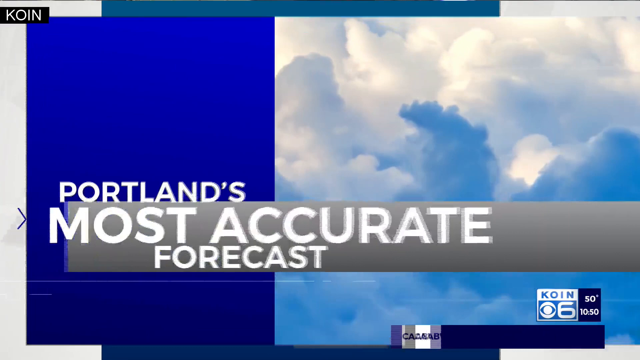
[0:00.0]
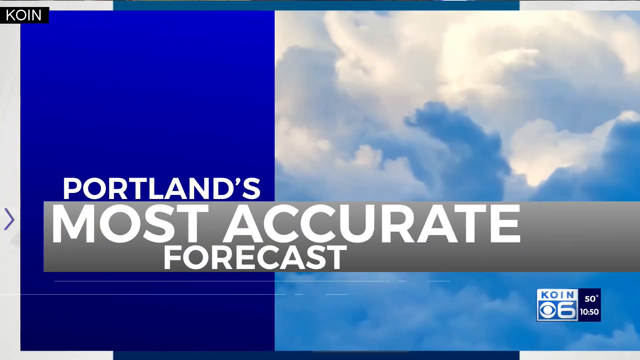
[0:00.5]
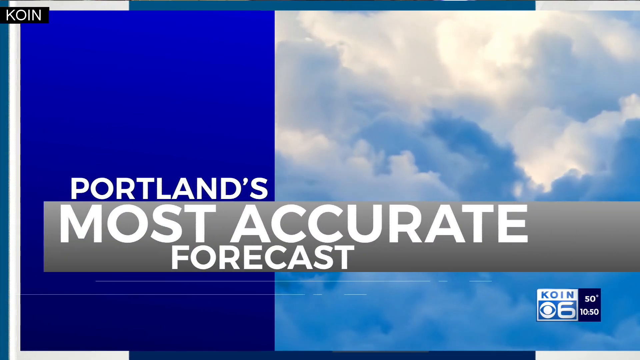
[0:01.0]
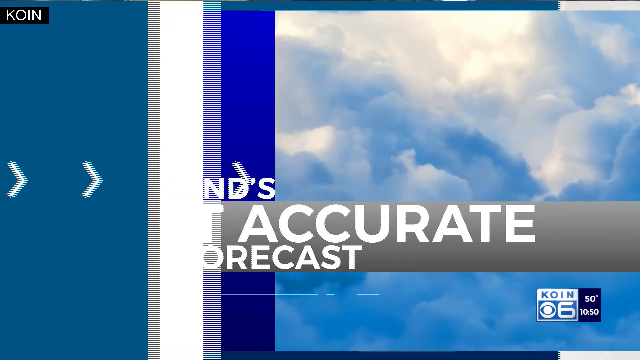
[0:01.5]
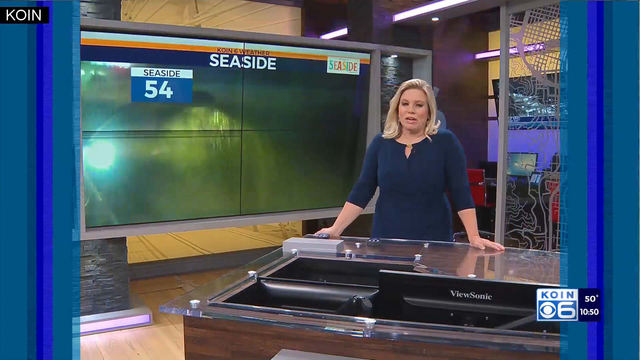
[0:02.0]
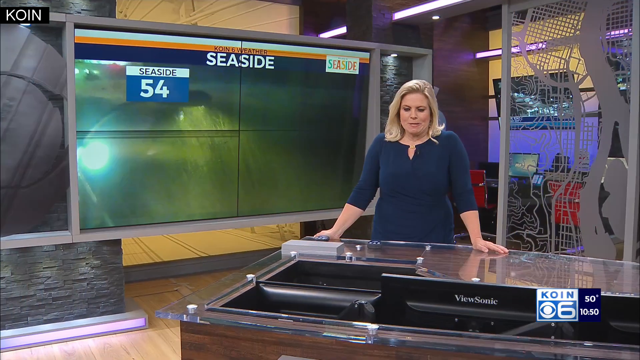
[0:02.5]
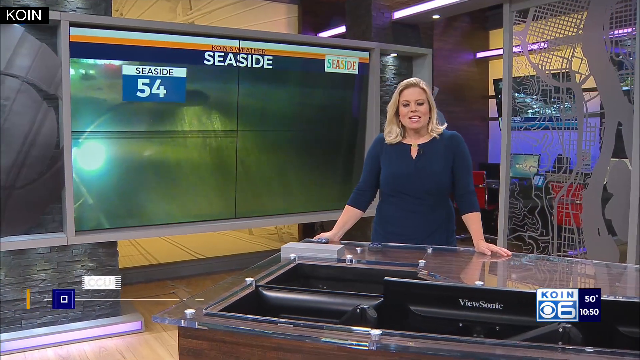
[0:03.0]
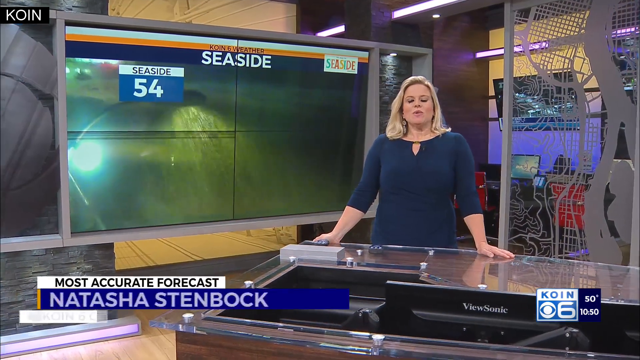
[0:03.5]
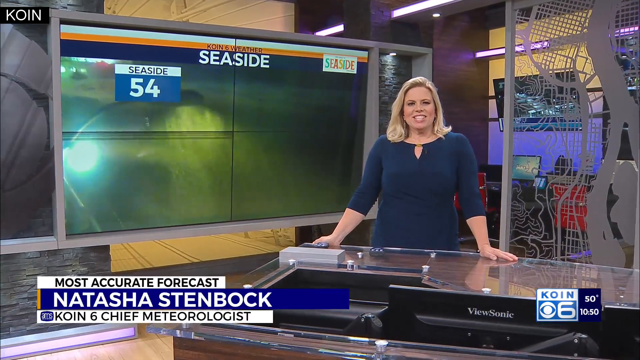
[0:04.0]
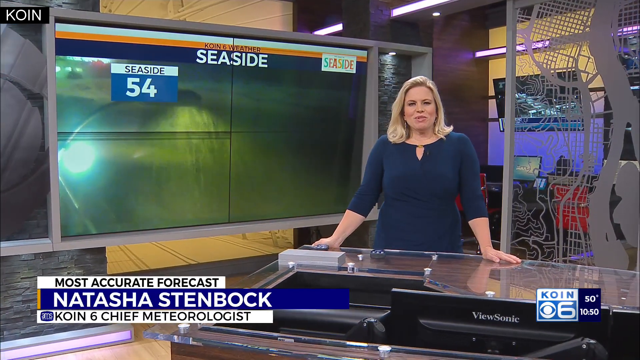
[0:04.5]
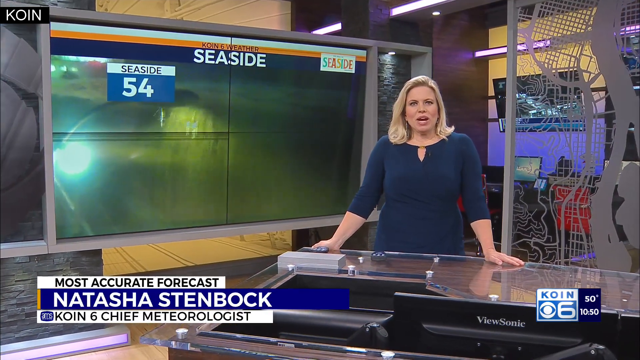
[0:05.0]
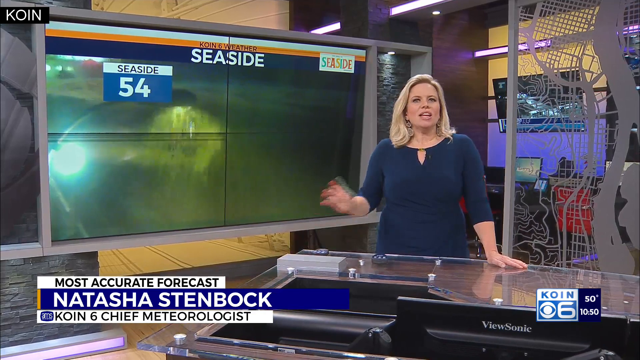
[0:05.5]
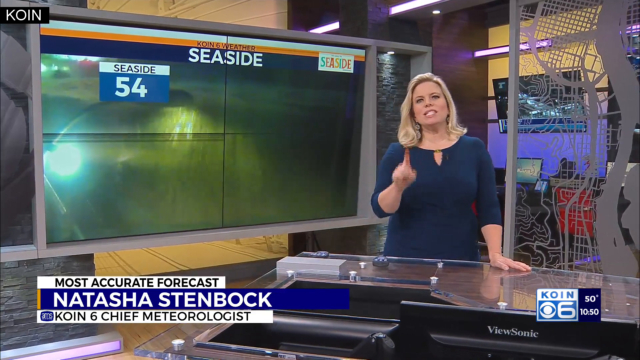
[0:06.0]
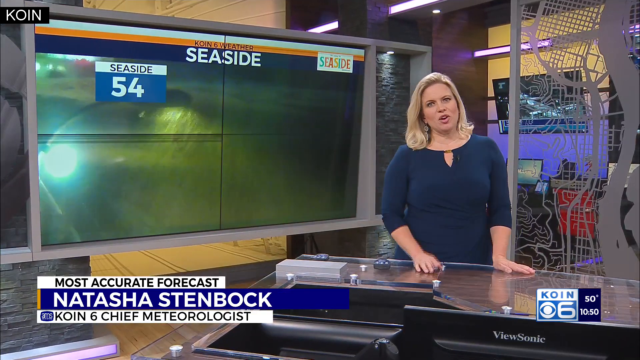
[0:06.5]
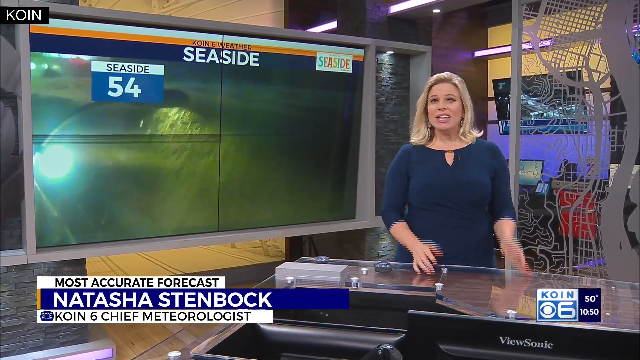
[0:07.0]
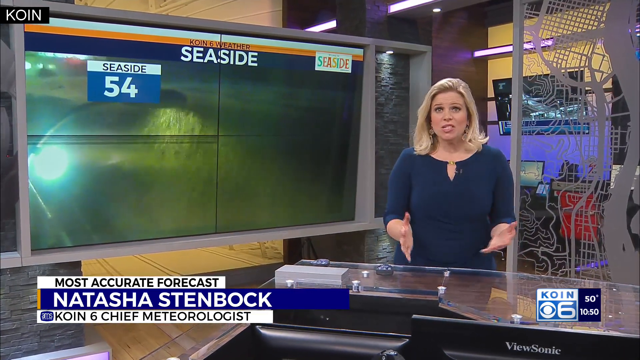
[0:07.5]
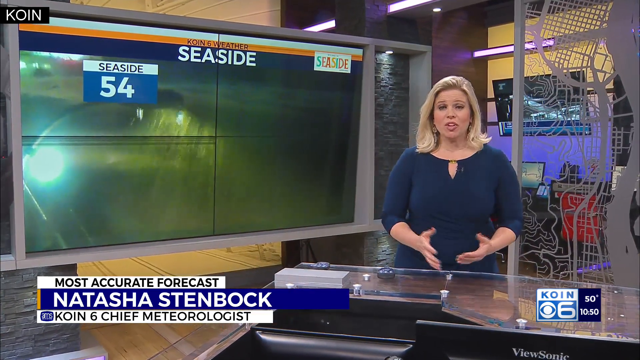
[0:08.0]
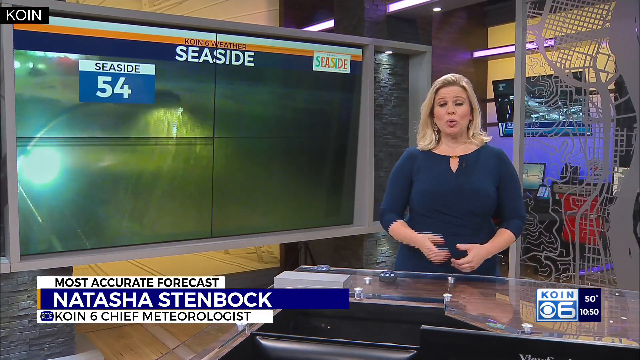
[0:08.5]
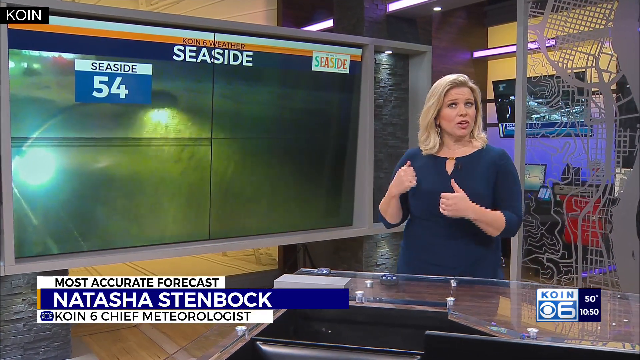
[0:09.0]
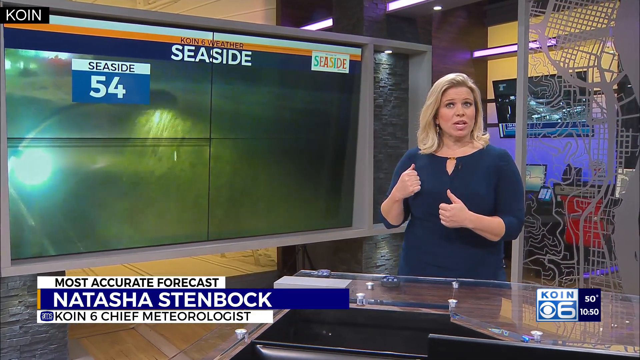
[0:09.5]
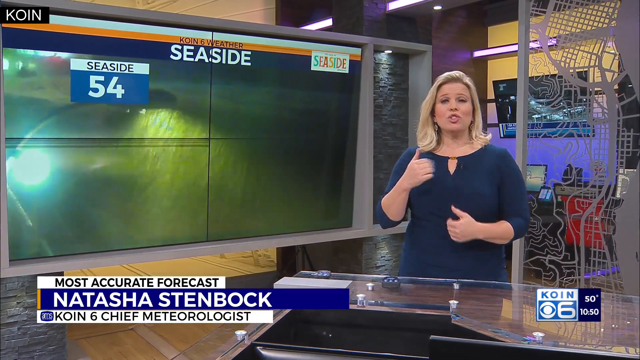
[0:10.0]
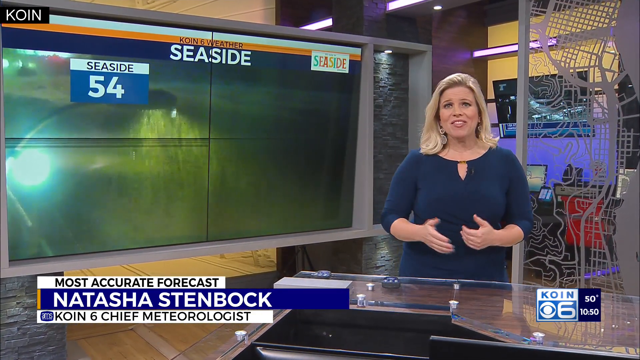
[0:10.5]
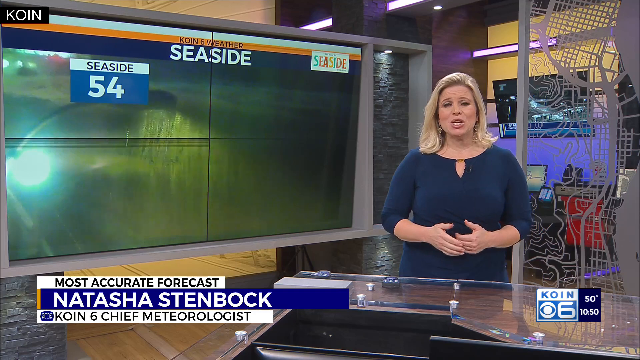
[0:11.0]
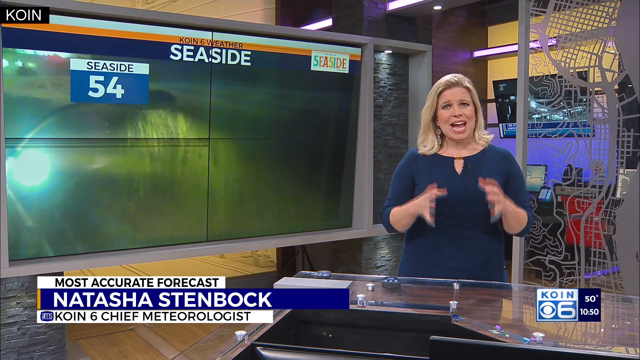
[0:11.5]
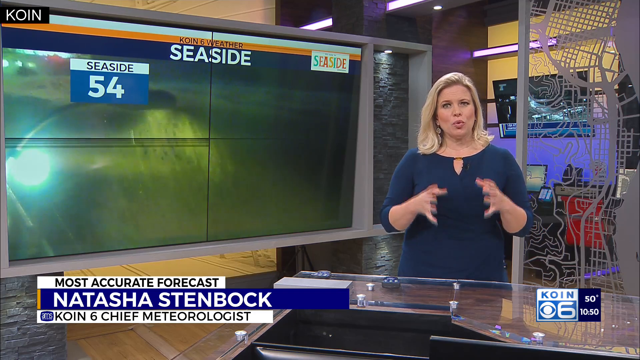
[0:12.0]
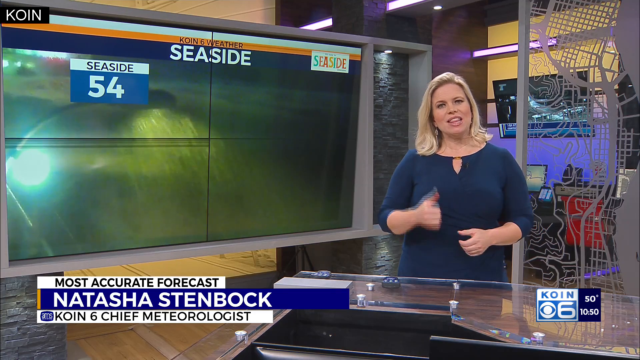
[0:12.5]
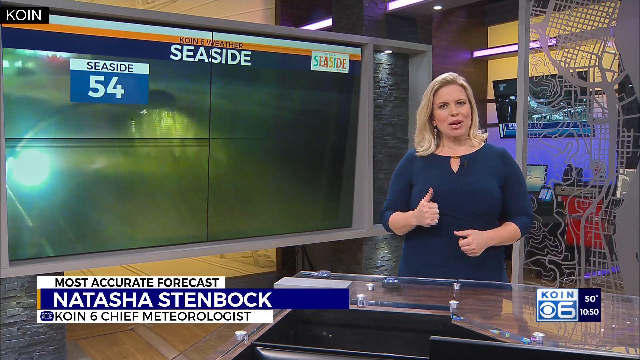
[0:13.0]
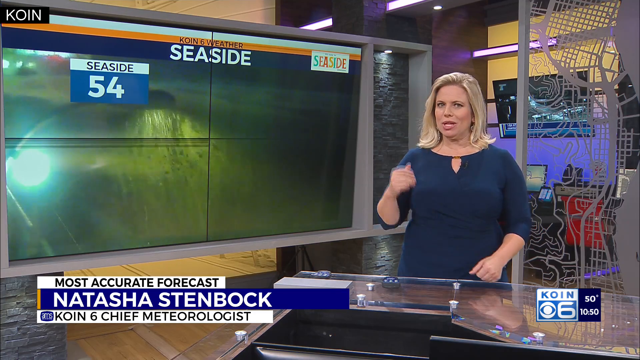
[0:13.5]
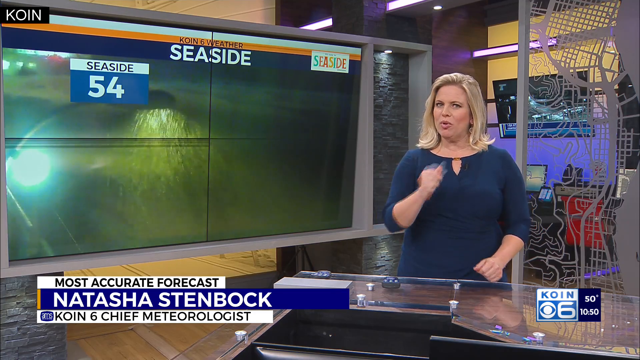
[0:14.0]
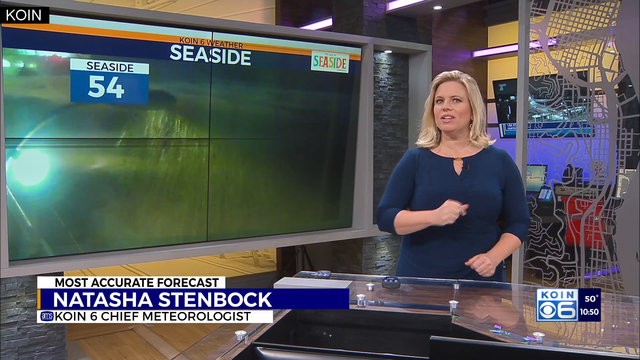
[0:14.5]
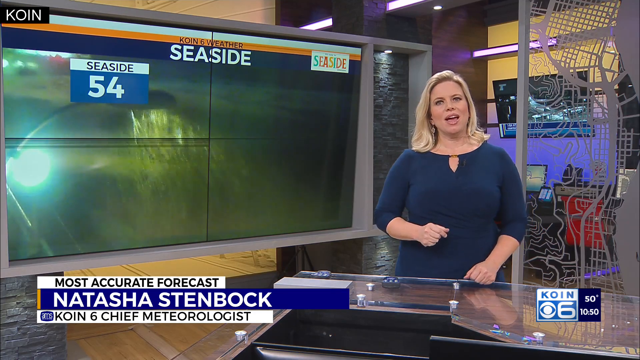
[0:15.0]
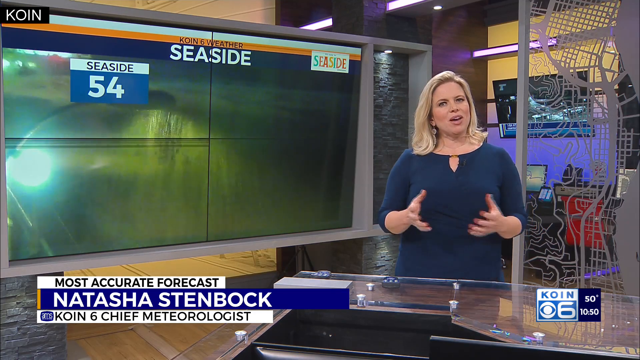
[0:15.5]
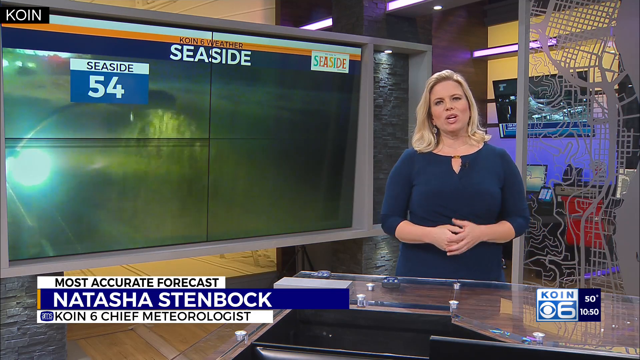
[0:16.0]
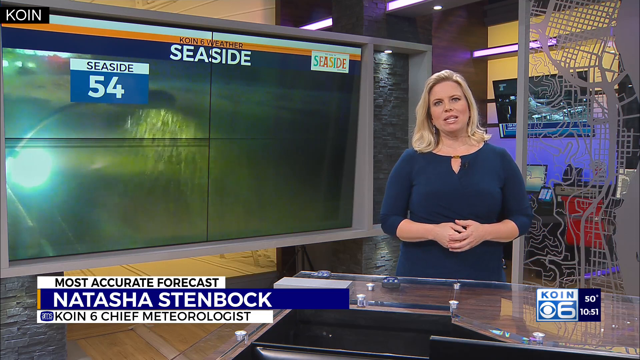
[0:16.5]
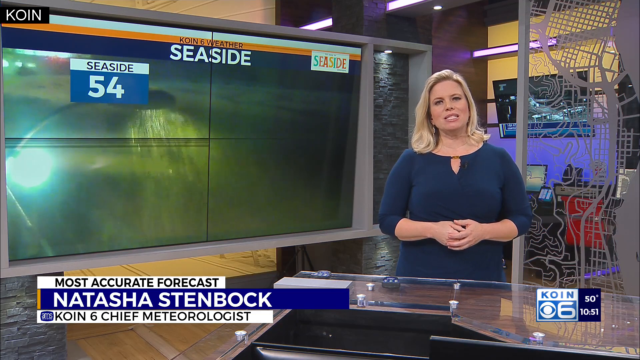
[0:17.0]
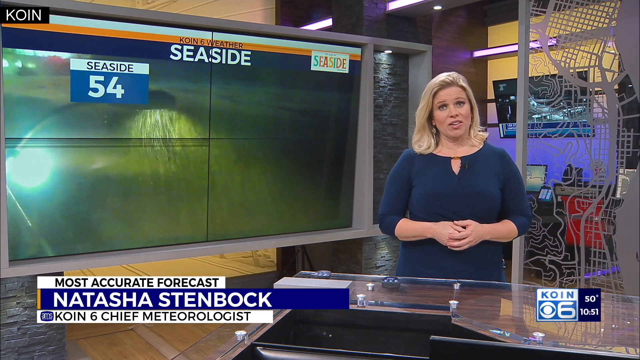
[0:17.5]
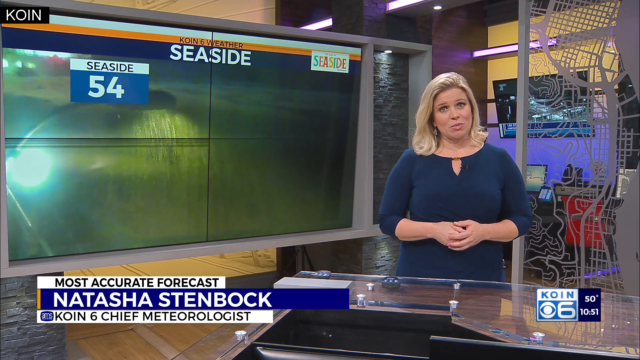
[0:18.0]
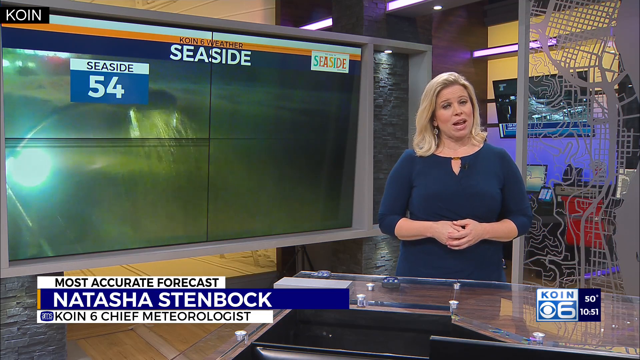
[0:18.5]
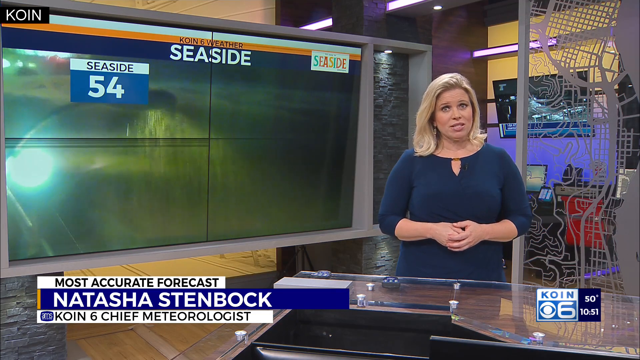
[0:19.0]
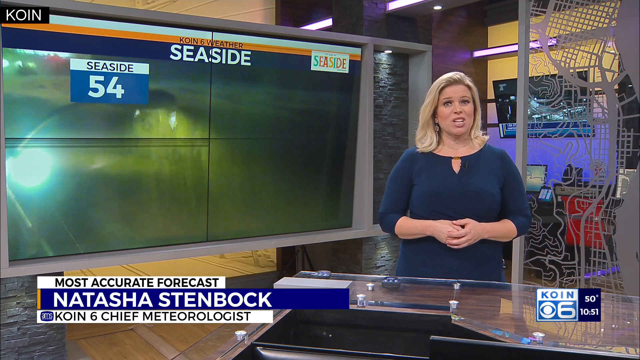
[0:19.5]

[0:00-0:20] The video opens with the text "Portland's most accurate forecast" and introduces the segment, showing "Seaside" and "Natasha Steinbach, Chief Meteorologist." She appears very expressive as she speaks. Footage shows what looks like heavy rain by a lamppost or light post on a street somewhere, falling fast with a lot of it pouring down from the sky.